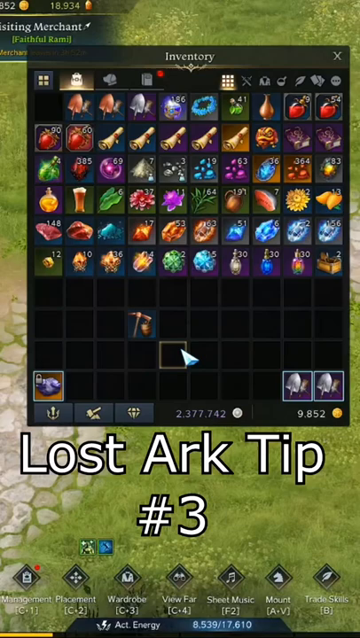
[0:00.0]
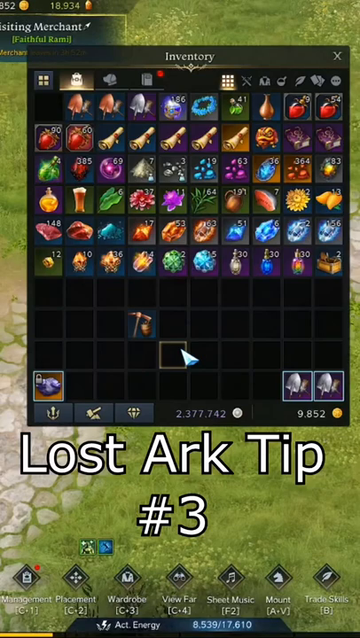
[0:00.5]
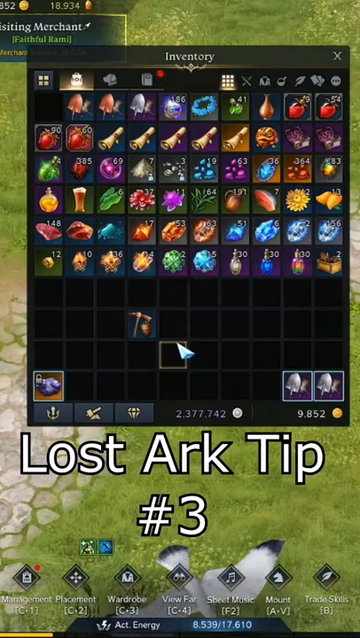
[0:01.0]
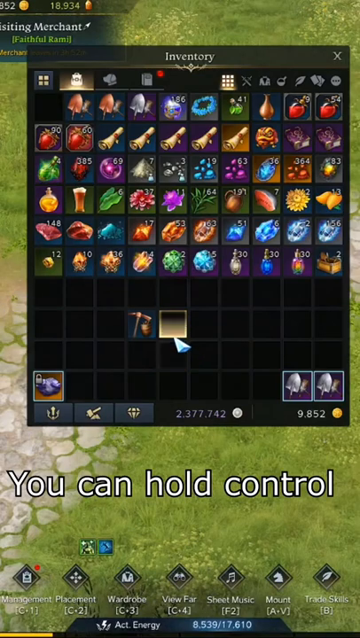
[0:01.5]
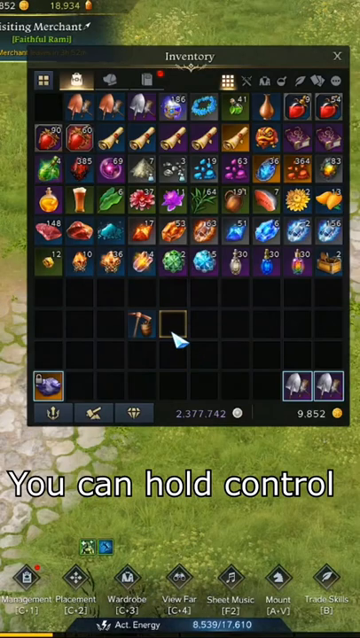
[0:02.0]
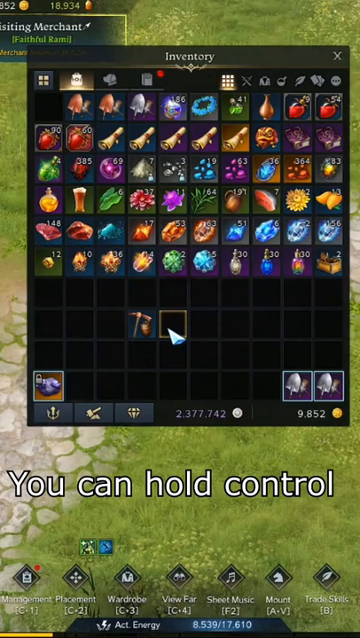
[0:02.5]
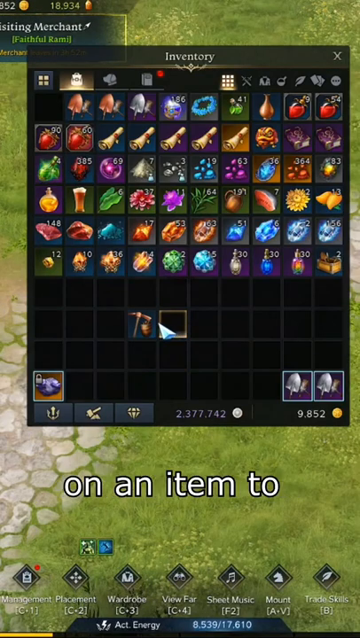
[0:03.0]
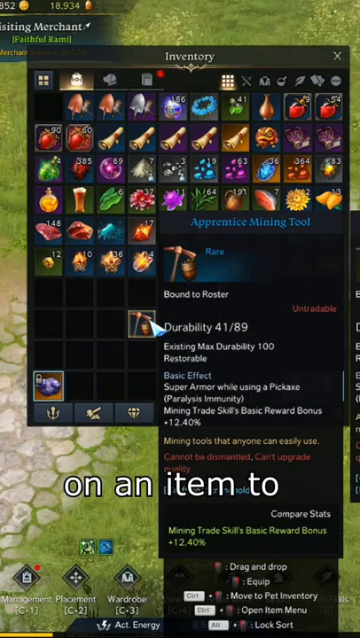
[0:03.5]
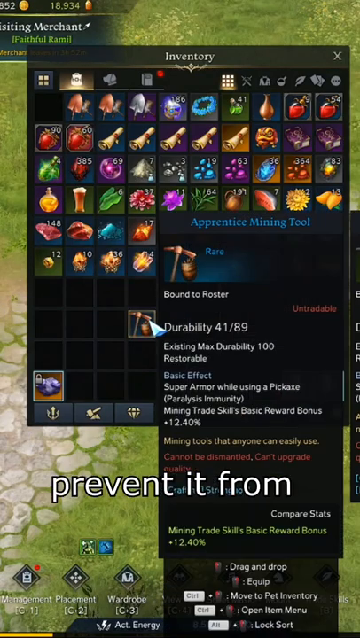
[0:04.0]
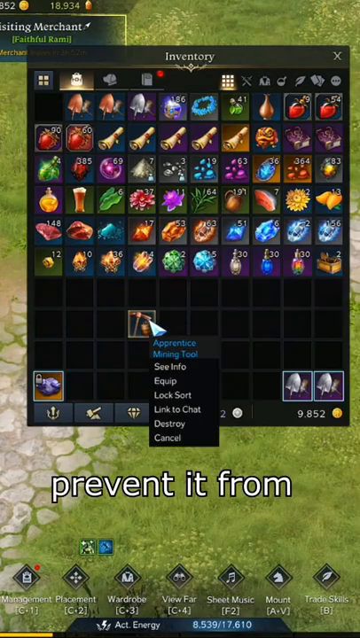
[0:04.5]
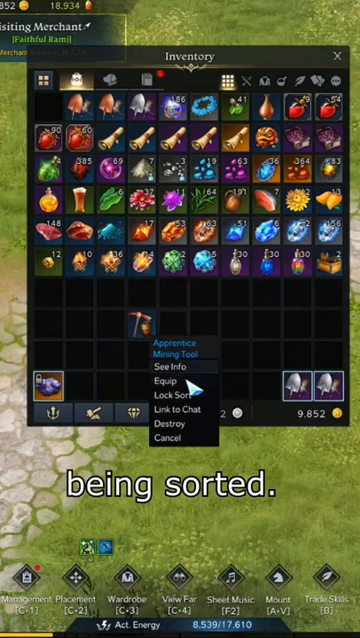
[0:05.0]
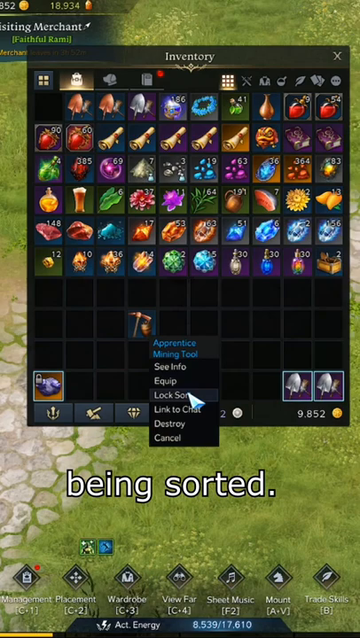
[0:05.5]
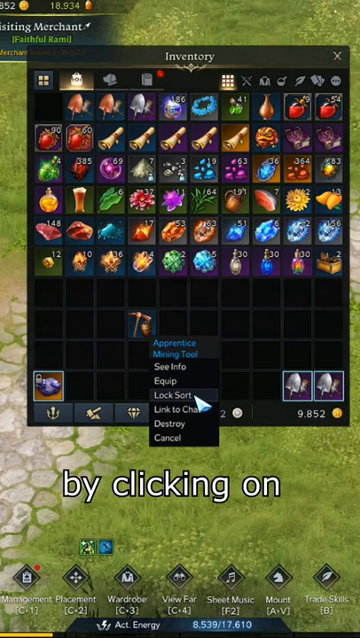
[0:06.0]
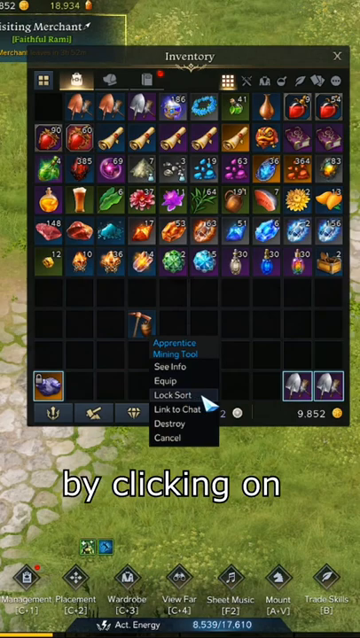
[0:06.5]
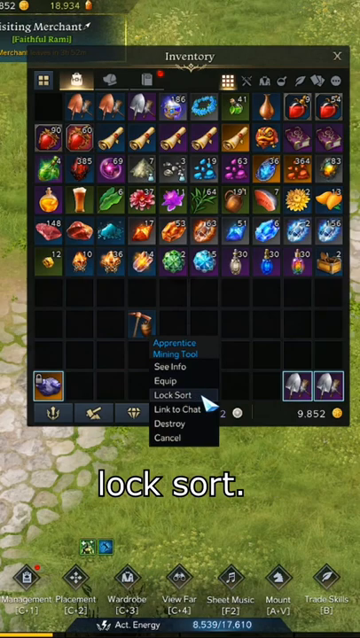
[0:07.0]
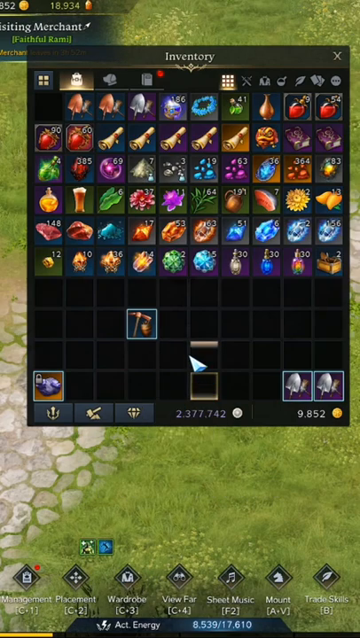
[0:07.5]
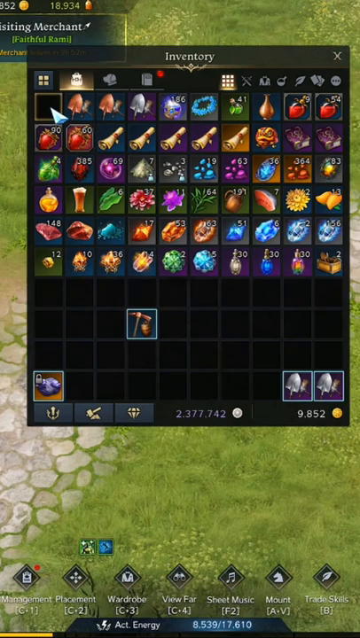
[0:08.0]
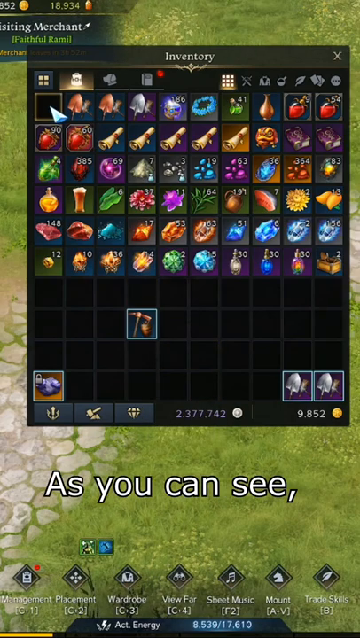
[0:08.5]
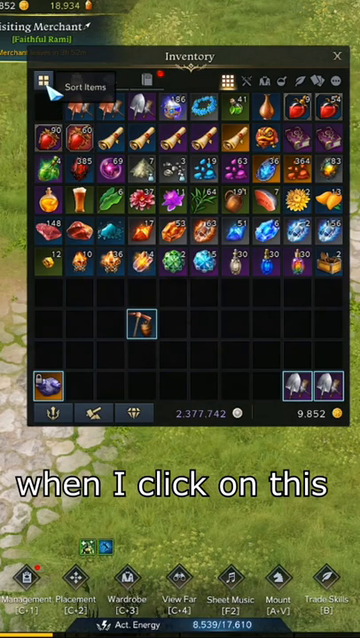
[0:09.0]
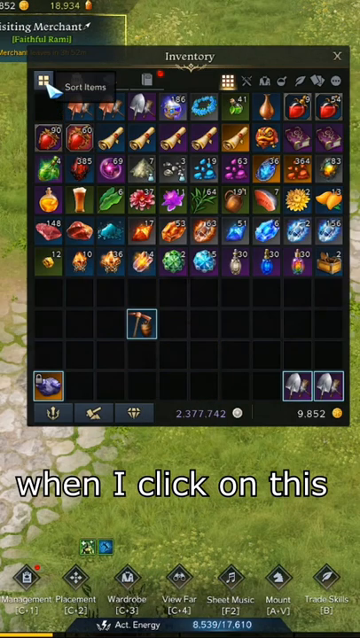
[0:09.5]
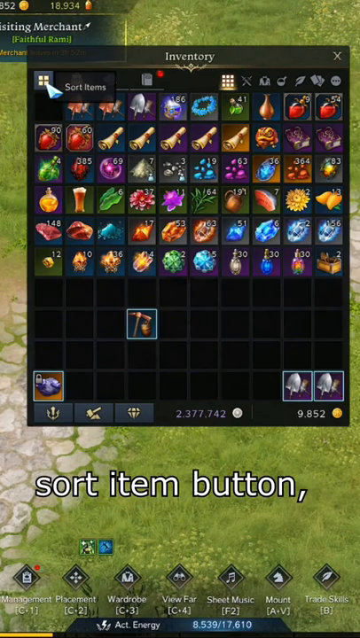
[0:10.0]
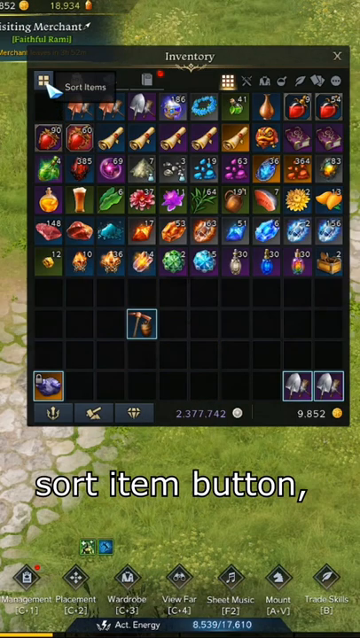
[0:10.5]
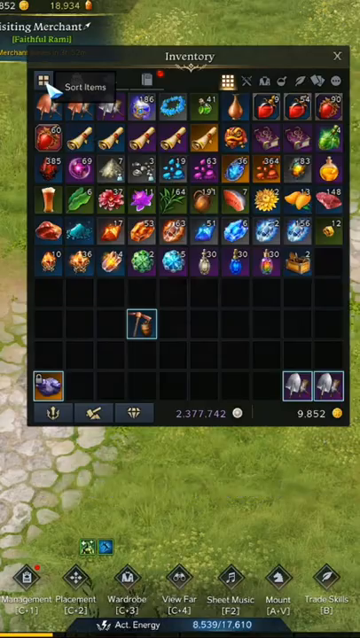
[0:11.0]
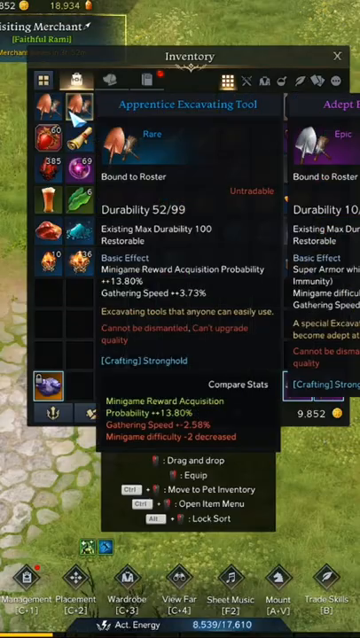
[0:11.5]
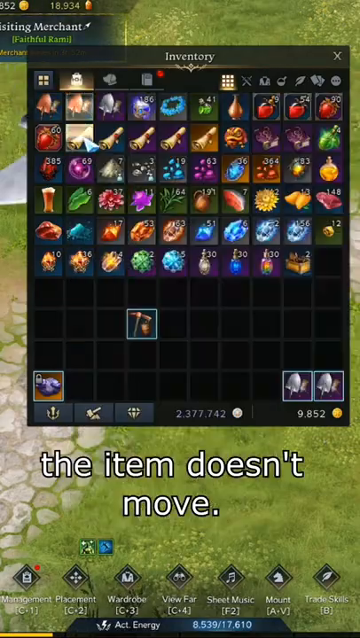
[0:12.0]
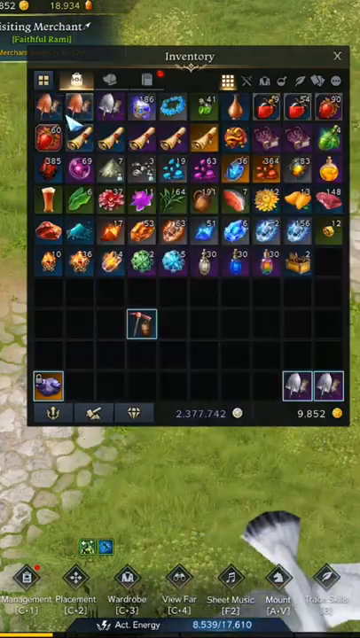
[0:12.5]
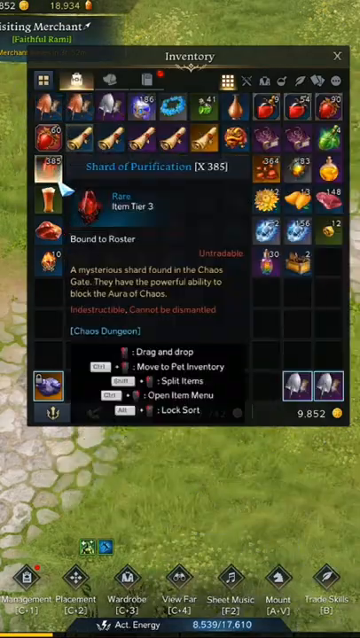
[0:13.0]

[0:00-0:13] The video shows a video game screen with an inventory at the top, filled with little emoji-like icons that could be used in the game. The screen is static and shows no action. The items include things like plants and all different kinds of tools, and each box has a number in it. A square in the upper left-hand corner has text including "merchant faithful ram." Some of the squares are separated. At the bottom of the screen, "lost ark tip" is written in big white letters, which seems to be the game's name. Also along the bottom are options reading "sheet music view far wardrobe placement management mount and trade skills," apparently clickable as part of the game. There are no real instructions; the only movement is a cursor at the bottom that kind of looks like a kite. It goes up and hits buttons that are changing. The icons in the boxes, apparently characters, show no other action and are kind of just staying still within their boxes.